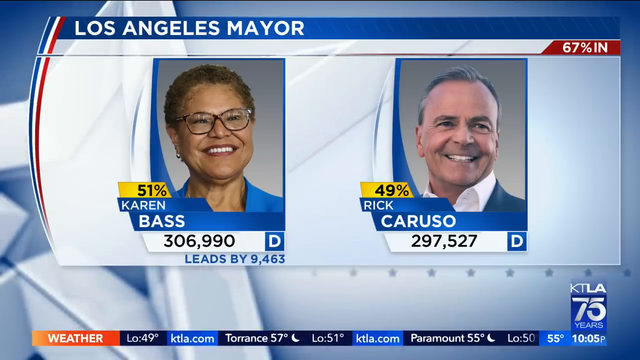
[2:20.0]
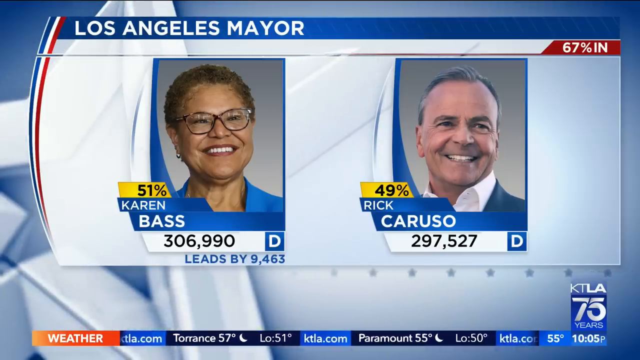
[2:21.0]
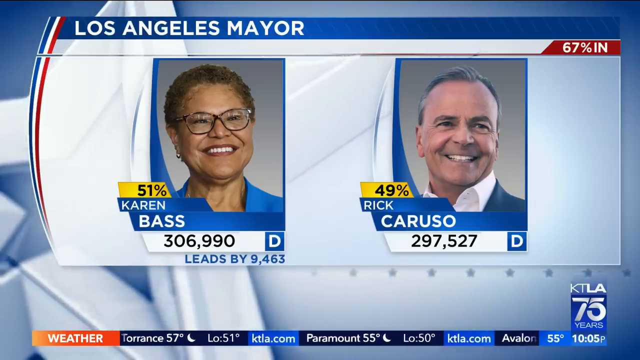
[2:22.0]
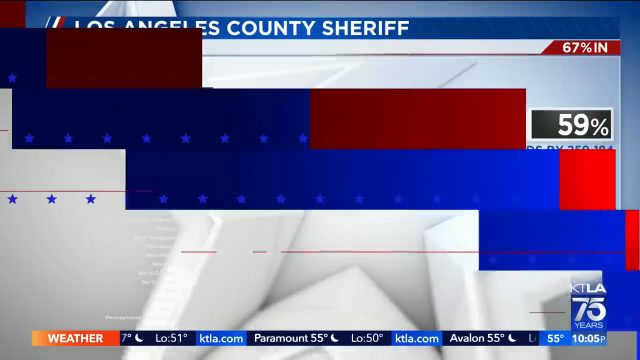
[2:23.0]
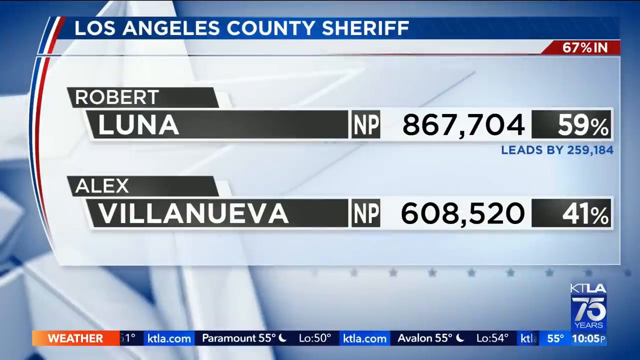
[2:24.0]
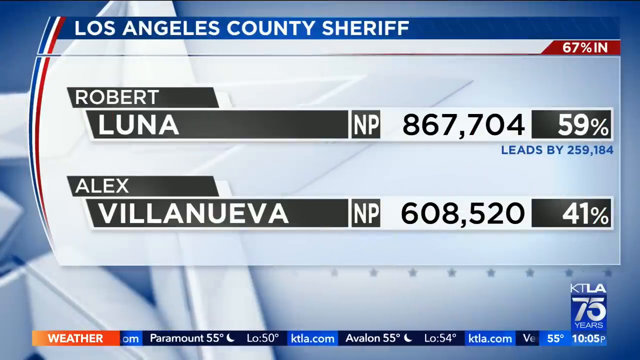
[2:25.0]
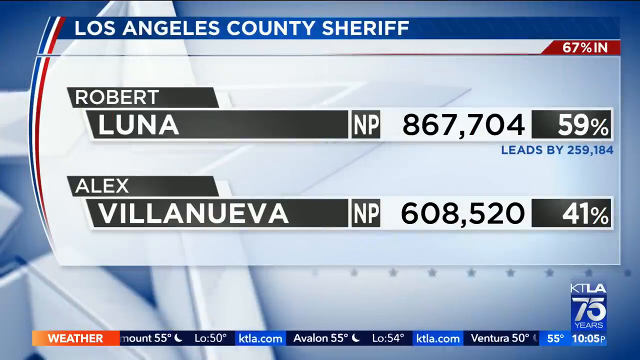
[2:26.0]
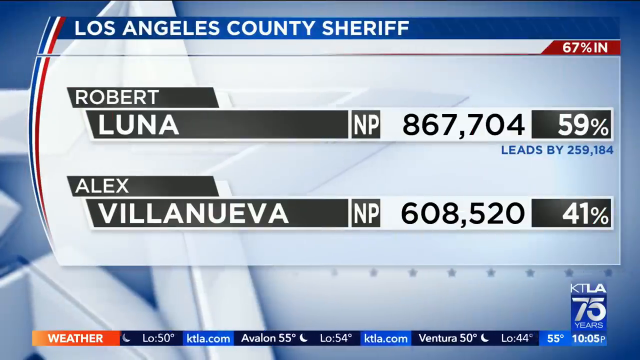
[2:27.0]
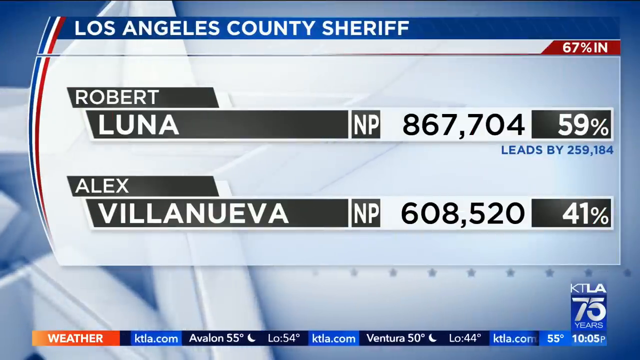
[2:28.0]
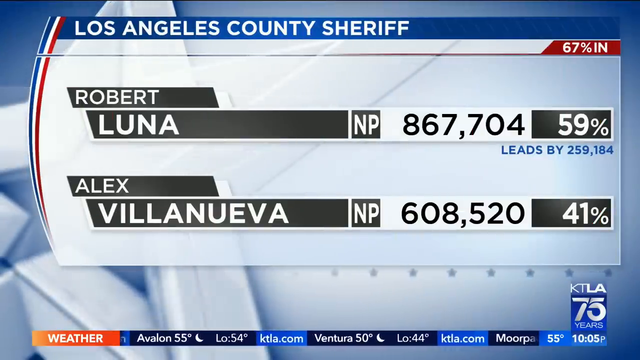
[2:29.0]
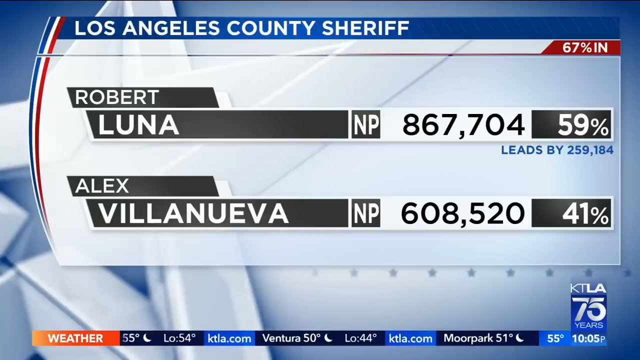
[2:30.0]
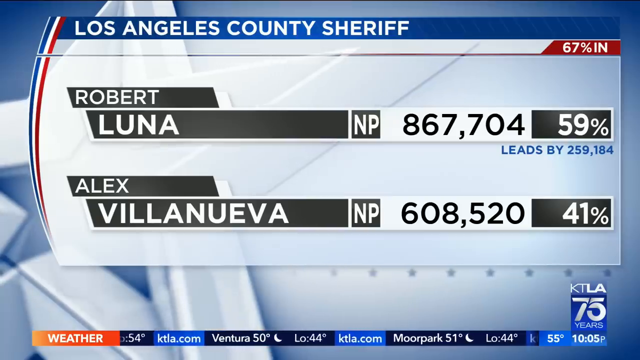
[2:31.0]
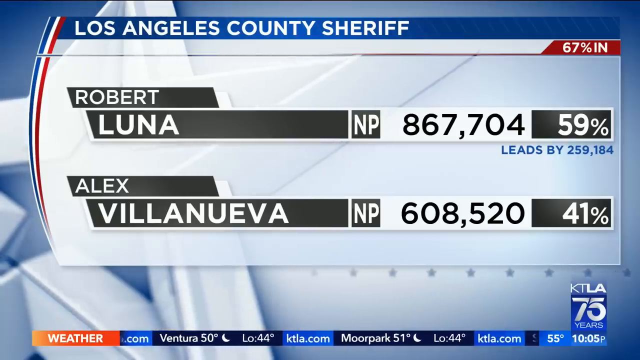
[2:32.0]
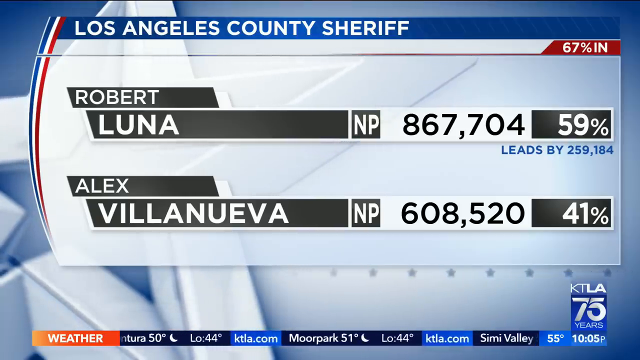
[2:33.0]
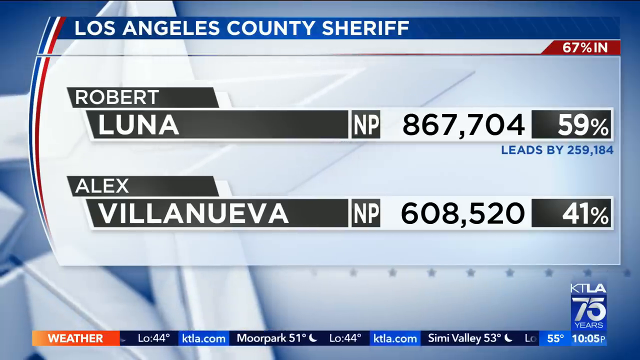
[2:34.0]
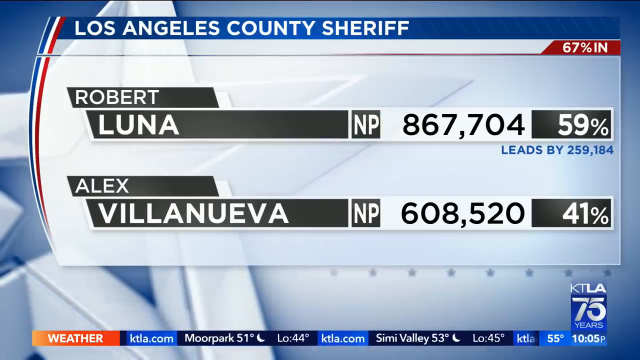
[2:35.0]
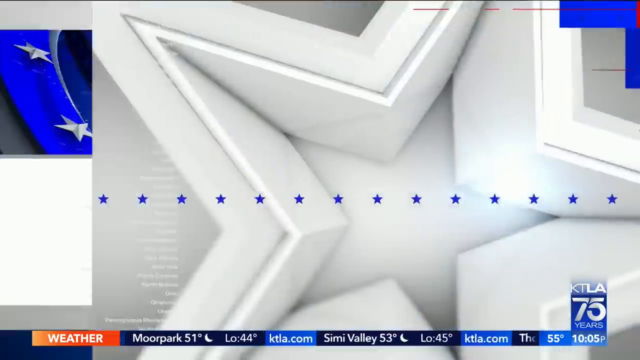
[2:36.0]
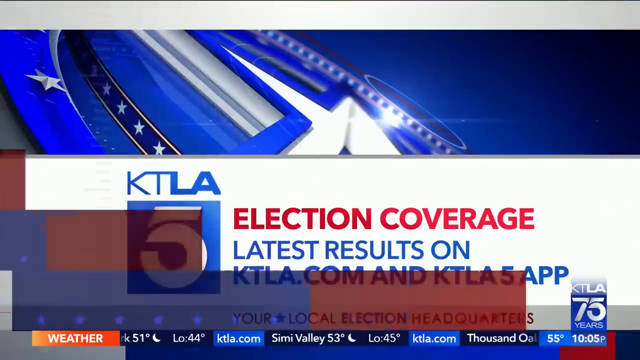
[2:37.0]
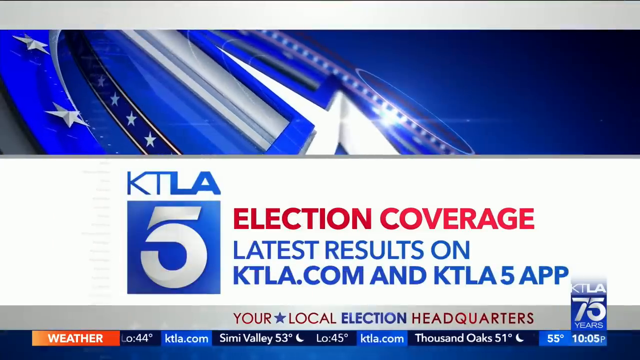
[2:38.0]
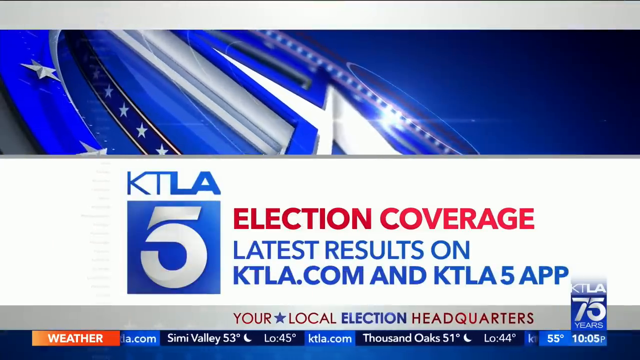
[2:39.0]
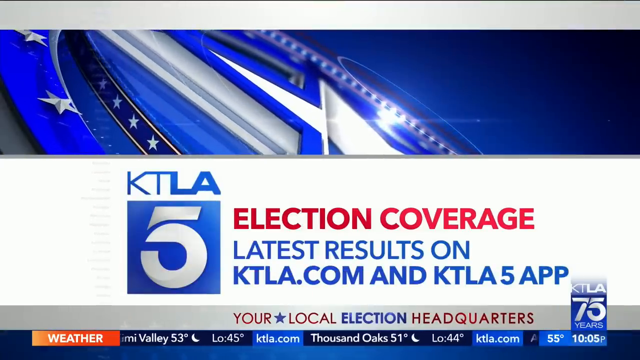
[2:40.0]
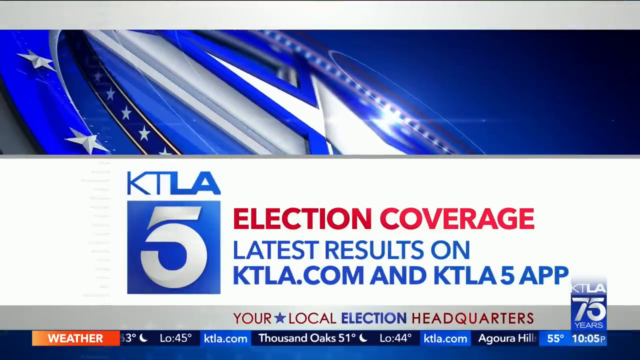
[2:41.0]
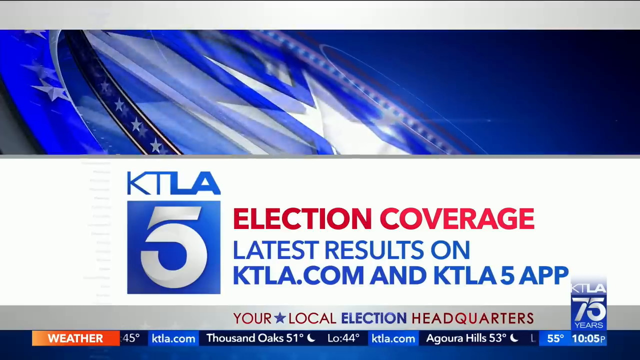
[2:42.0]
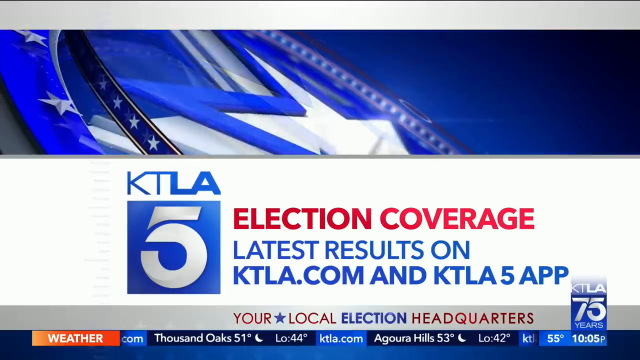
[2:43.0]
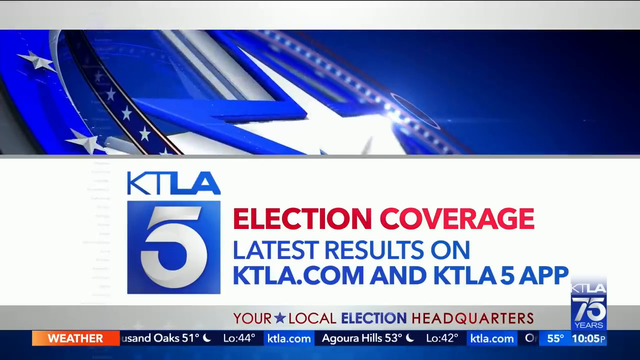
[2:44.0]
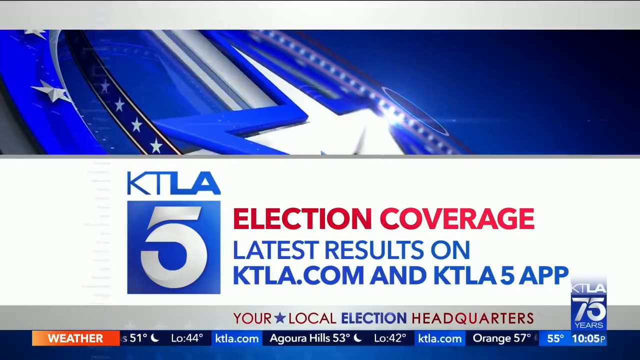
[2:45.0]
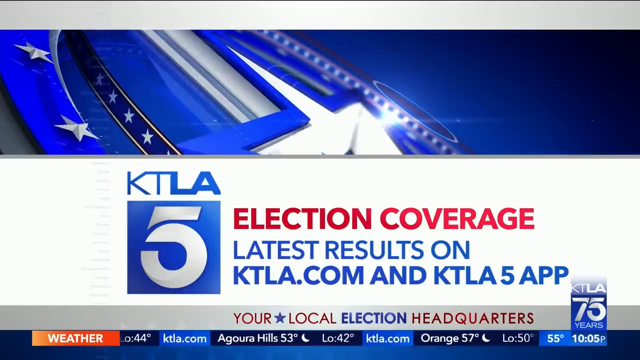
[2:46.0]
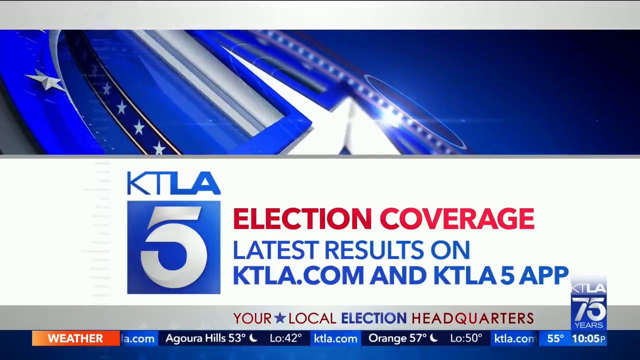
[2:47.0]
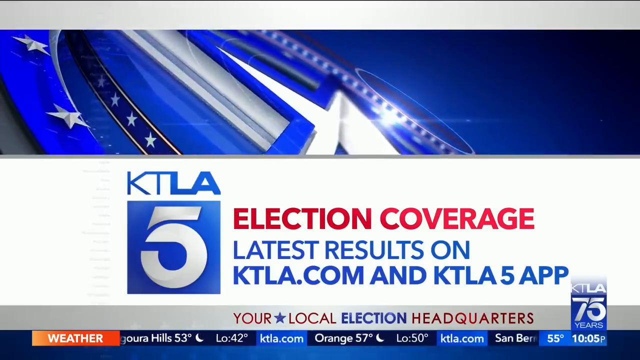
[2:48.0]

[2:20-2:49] A quick image of Bass v. Caruso appears, then the coverage switches to Los Angeles County Sheriff results, Robert Luna v. Alex Villanueva, with "election coverage, latest results on ktla.com and ktla5app". The coverage alternates between the Bass v. Caruso screen and the sheriff's election screen on the same background as before; Luna is ahead. No party is indicated, only "NP", which probably means no party. ktla75 and ktla5 branding appears.